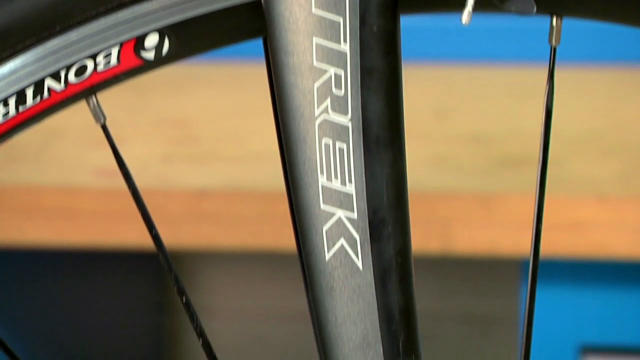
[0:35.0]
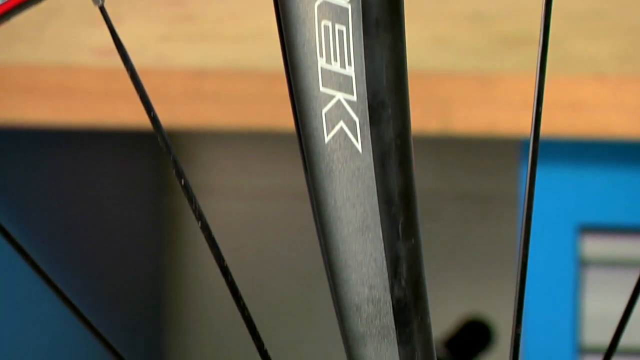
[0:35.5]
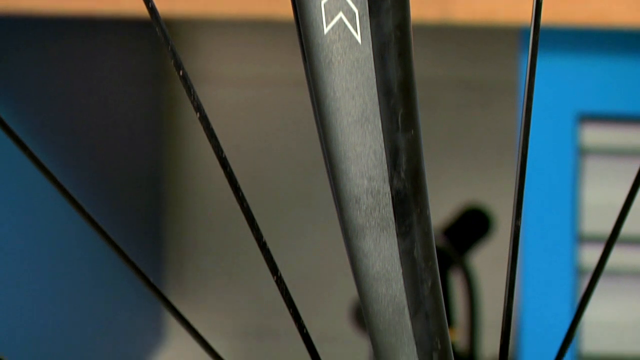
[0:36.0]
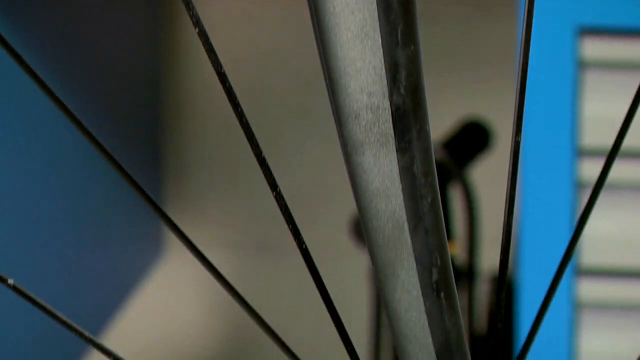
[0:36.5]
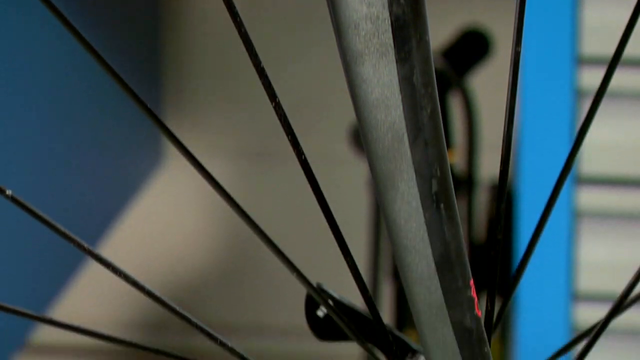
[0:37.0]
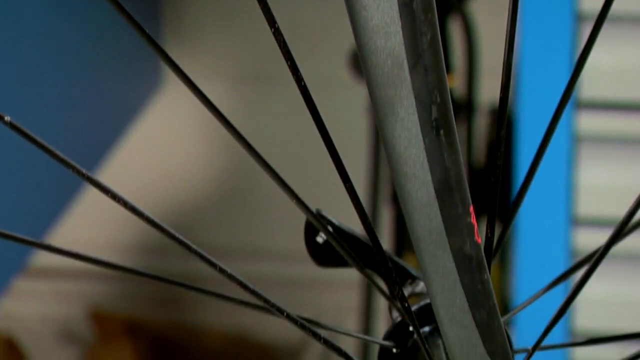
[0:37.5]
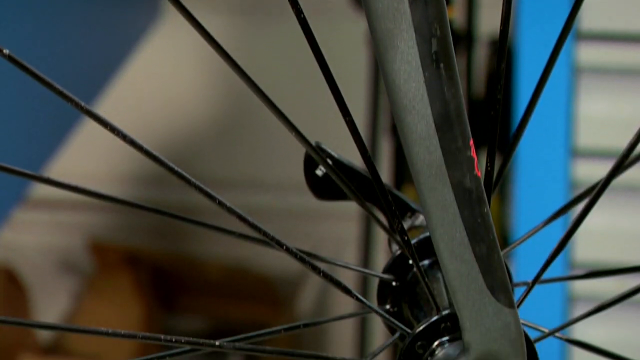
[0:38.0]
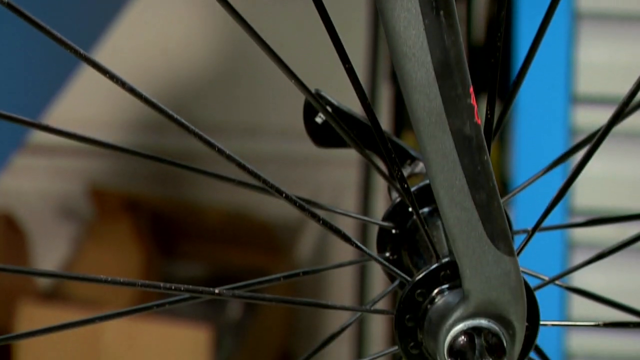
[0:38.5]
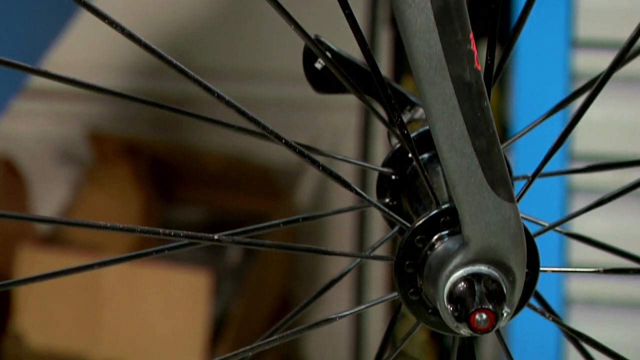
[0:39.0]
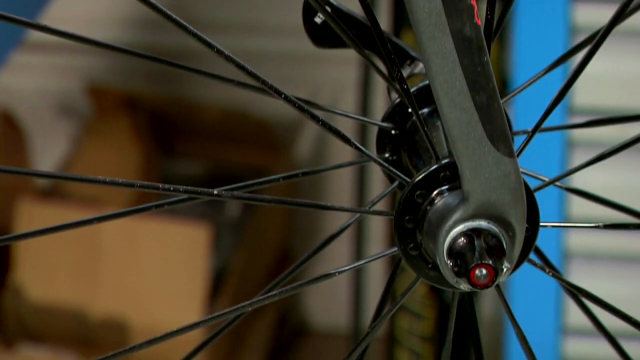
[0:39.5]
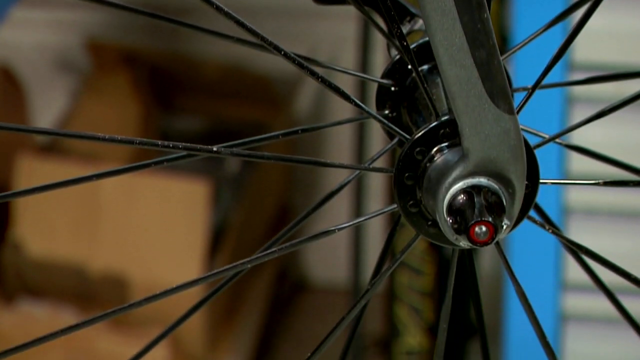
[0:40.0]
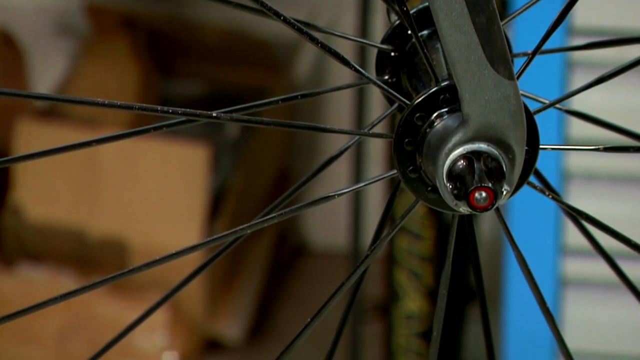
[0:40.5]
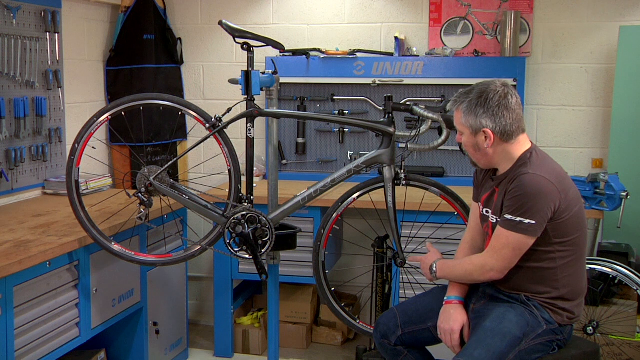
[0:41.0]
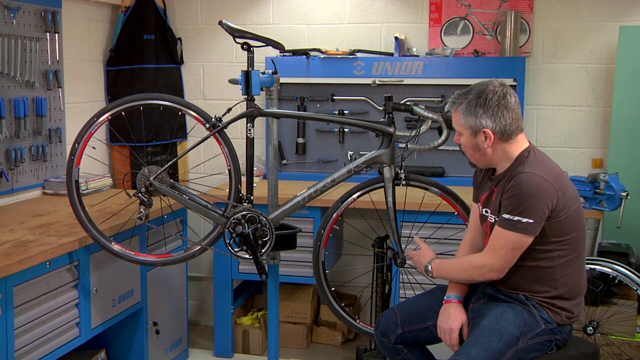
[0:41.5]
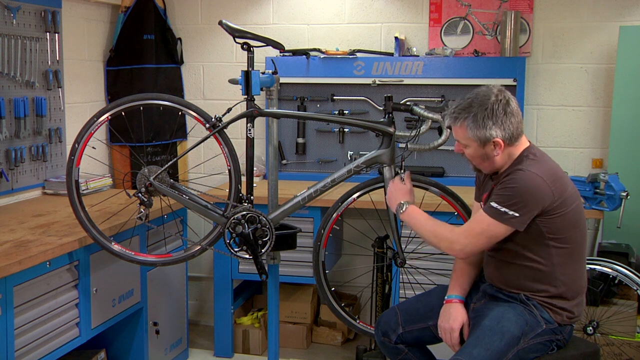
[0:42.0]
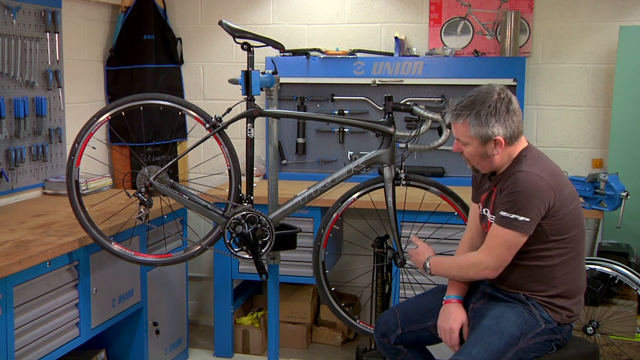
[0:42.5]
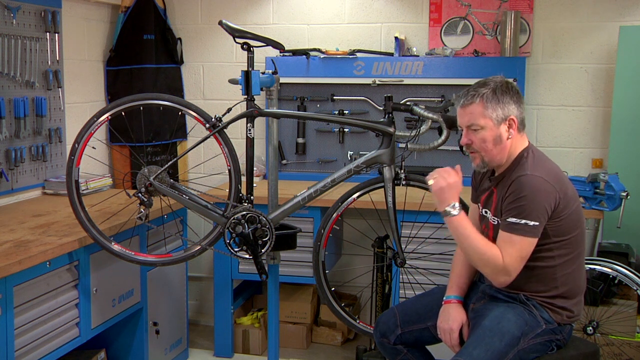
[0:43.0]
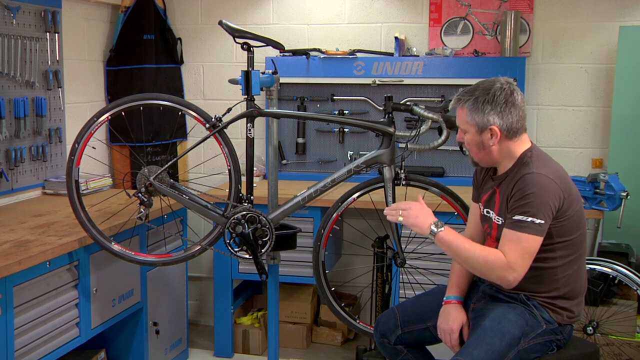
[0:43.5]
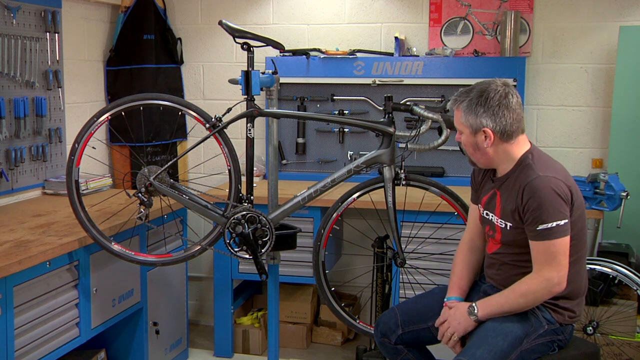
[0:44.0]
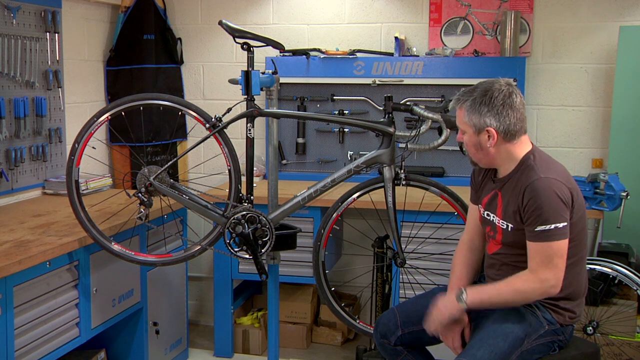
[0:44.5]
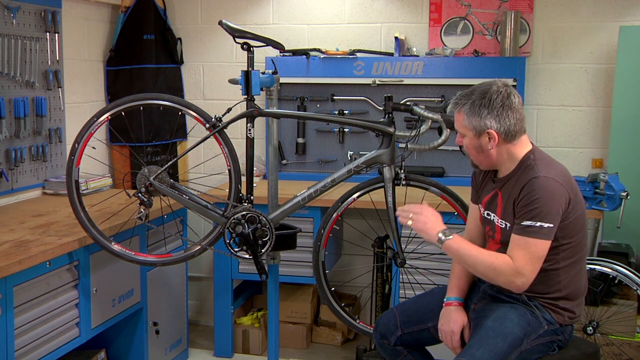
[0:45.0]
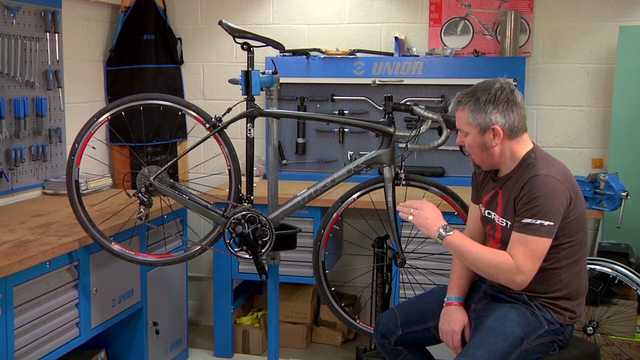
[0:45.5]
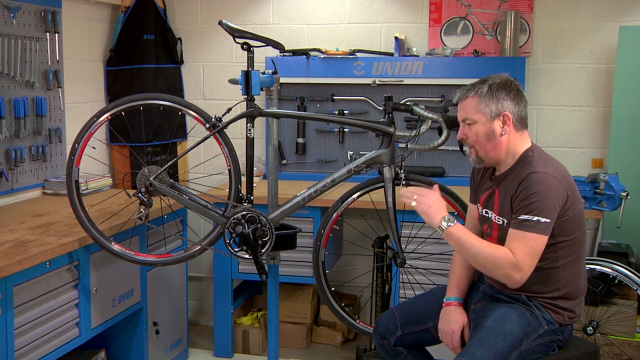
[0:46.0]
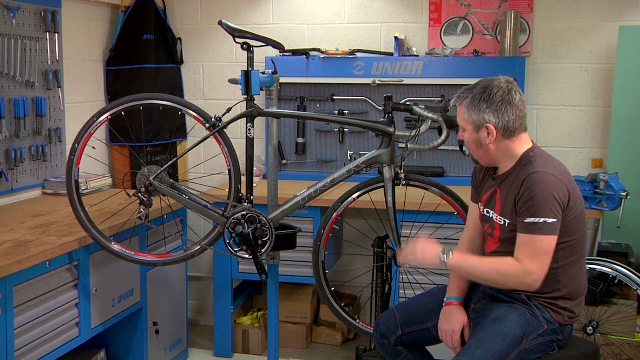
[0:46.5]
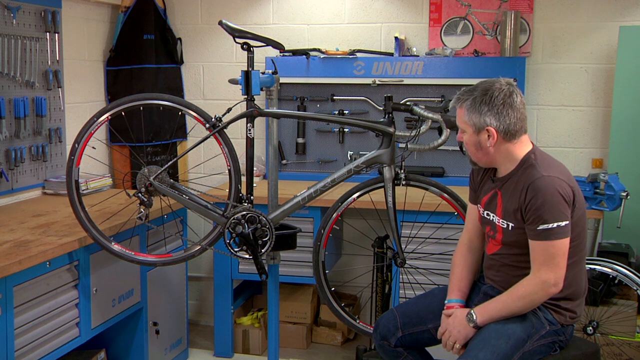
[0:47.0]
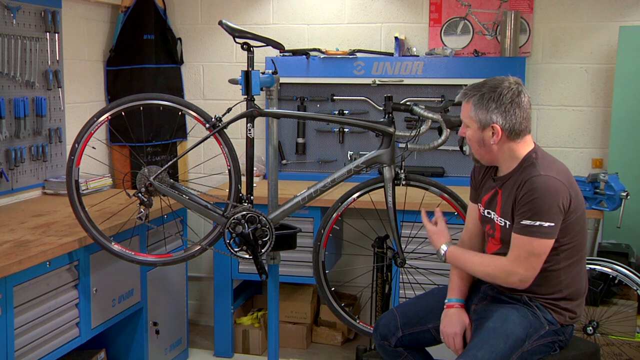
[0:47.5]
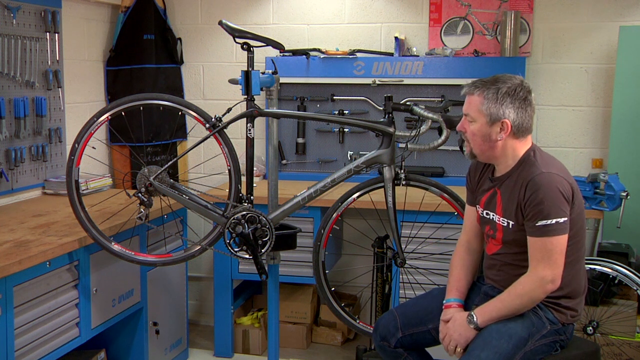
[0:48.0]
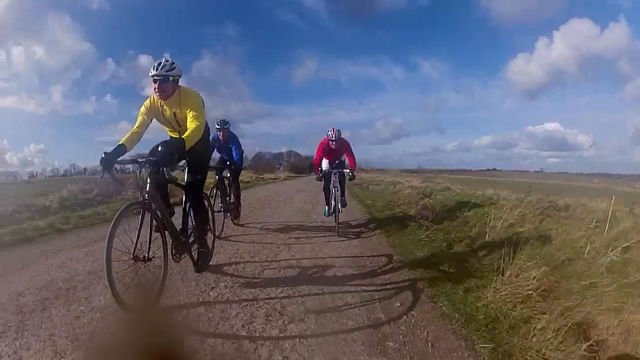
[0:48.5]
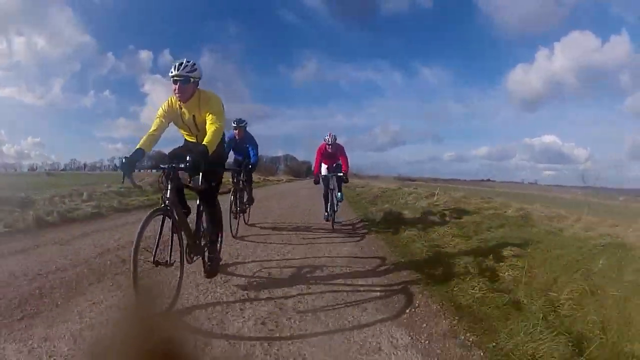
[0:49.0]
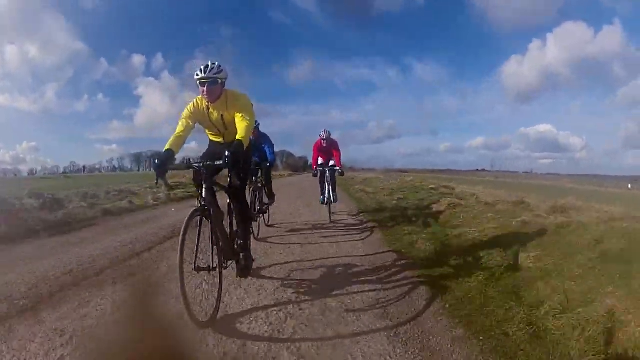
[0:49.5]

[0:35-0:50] The camera pans down the fork of the bike to the center where the spokes radiate out. The gentleman talks about the bike, first pointing to the spokes, the wheel and the tire, then holding his hand out flat and moving it back and forth parallel to the ground. Apparently three people ride along a dirt path through a field, looking like they are racing each other.